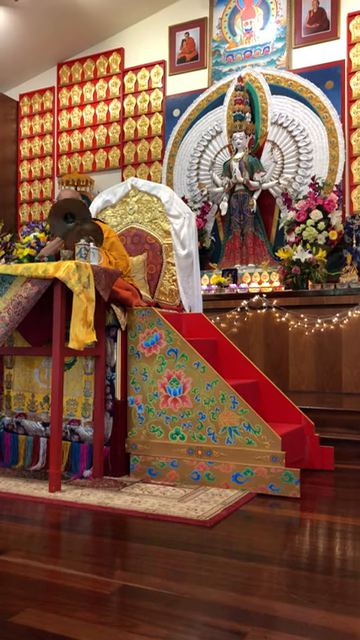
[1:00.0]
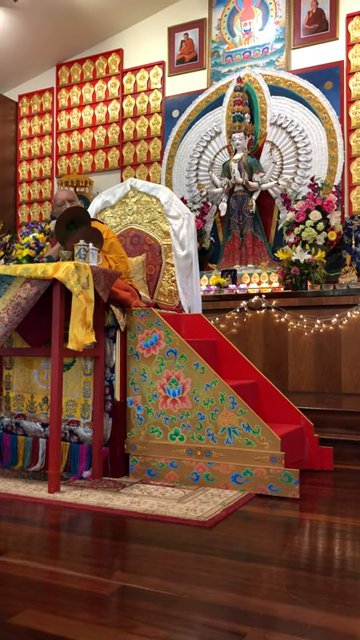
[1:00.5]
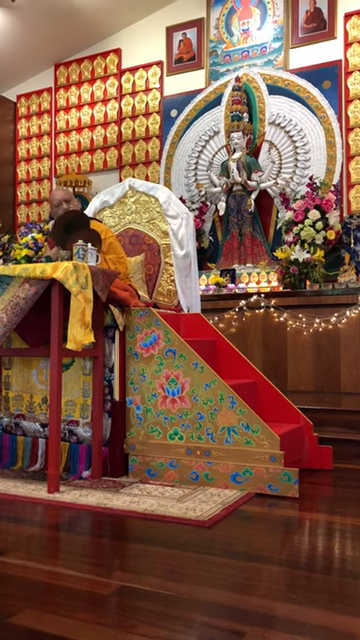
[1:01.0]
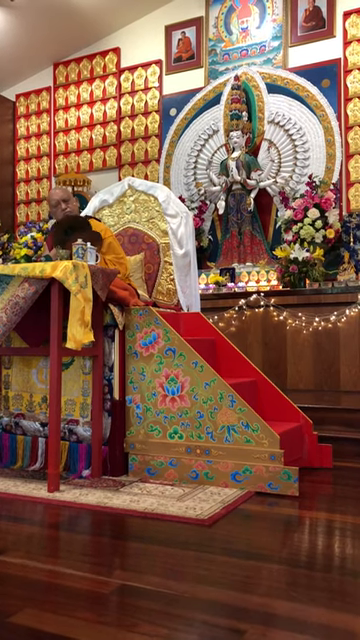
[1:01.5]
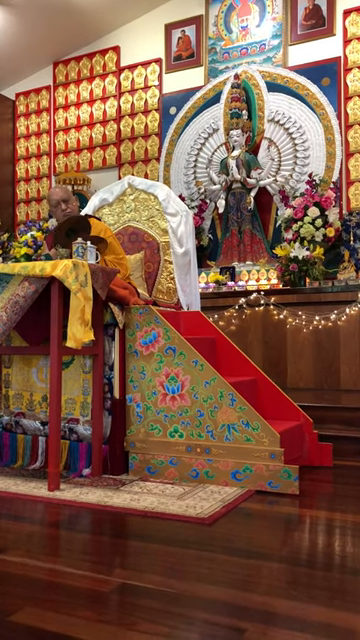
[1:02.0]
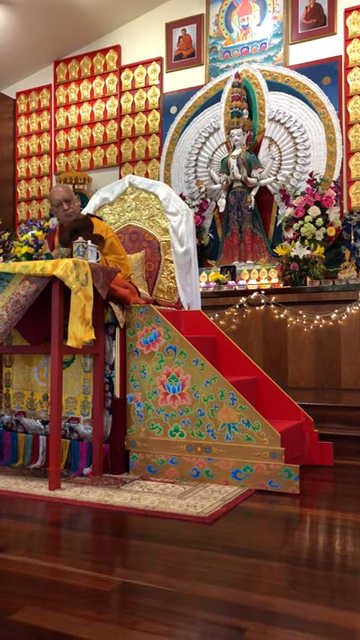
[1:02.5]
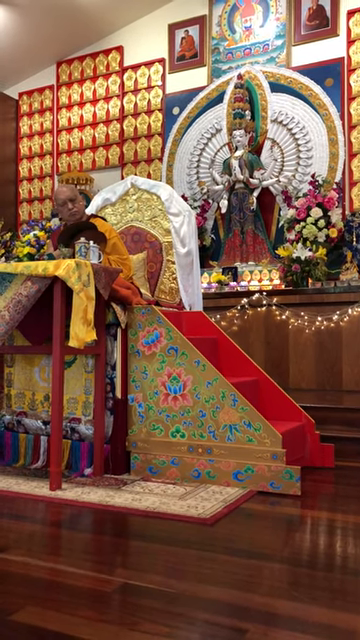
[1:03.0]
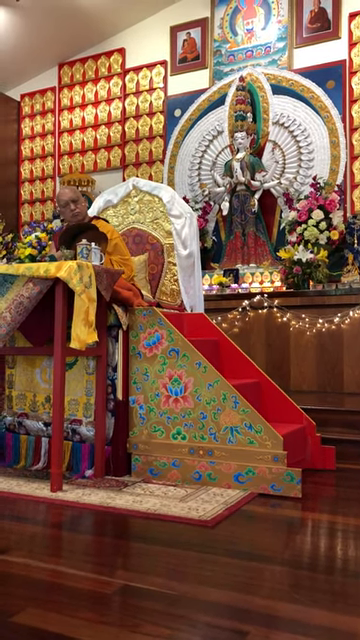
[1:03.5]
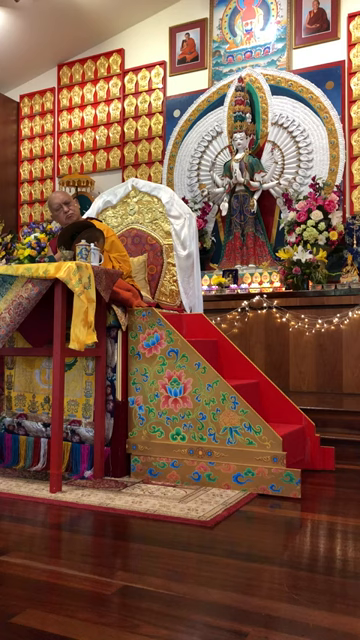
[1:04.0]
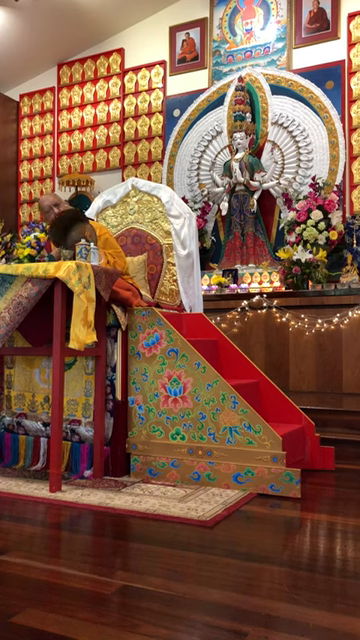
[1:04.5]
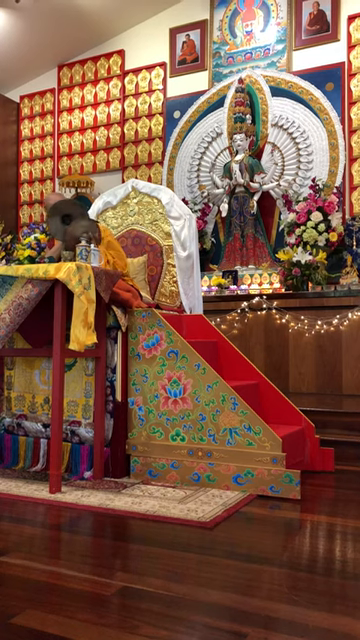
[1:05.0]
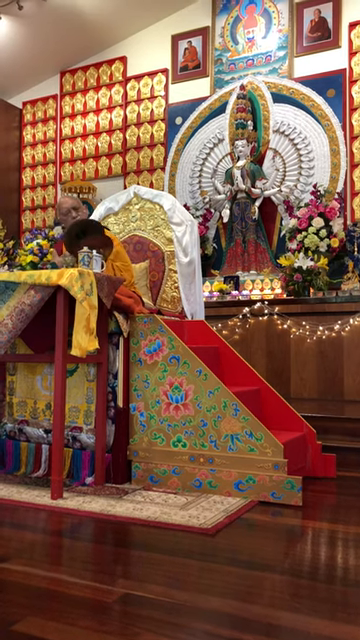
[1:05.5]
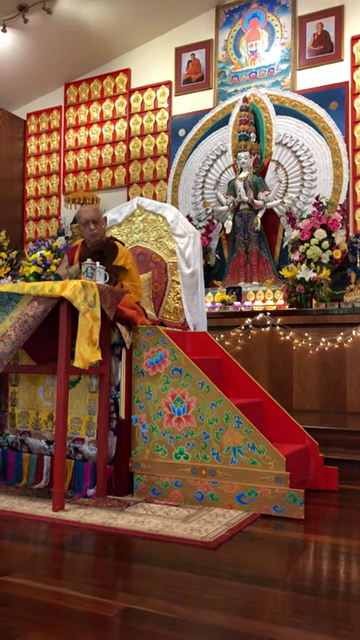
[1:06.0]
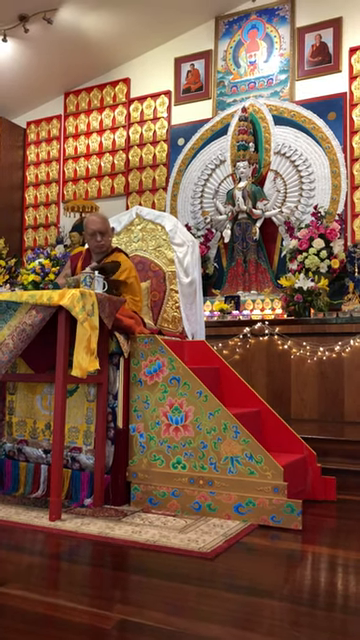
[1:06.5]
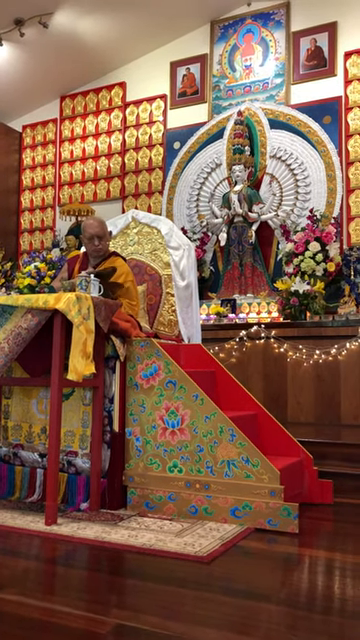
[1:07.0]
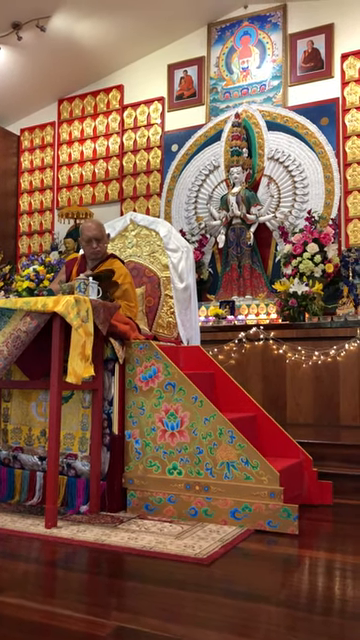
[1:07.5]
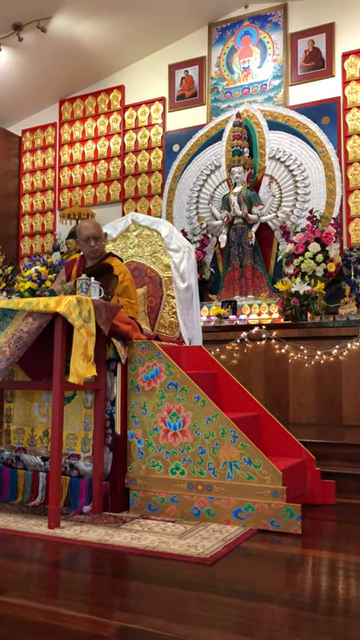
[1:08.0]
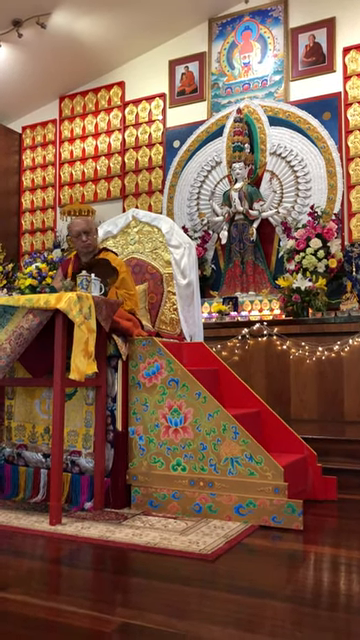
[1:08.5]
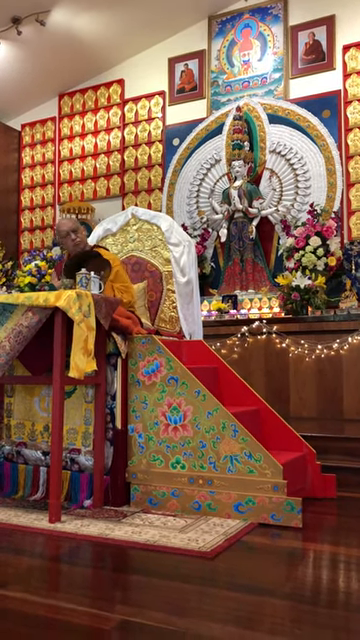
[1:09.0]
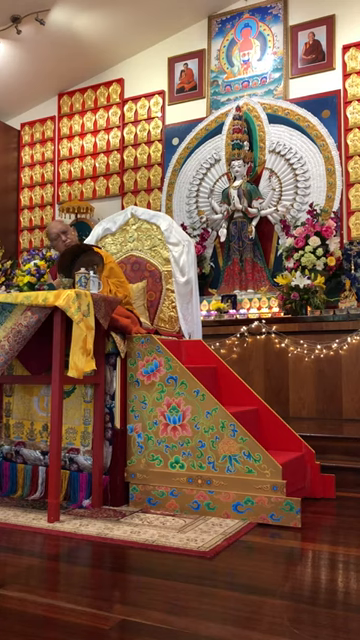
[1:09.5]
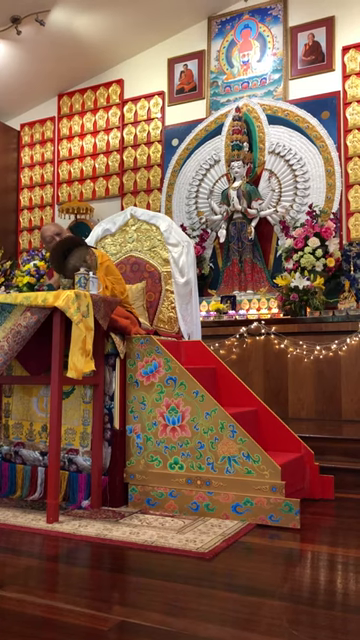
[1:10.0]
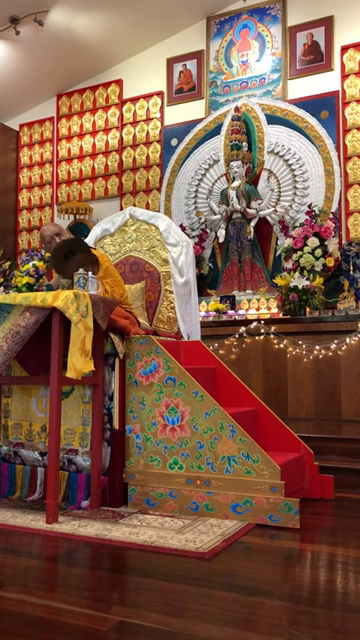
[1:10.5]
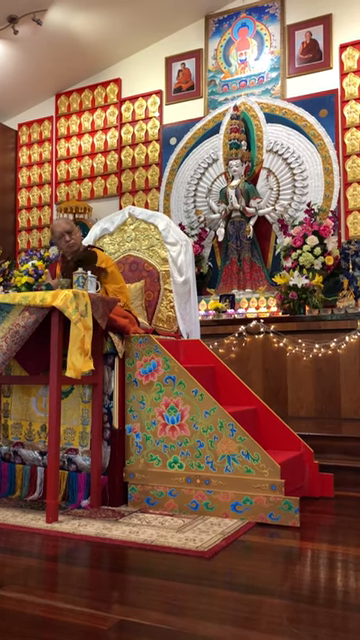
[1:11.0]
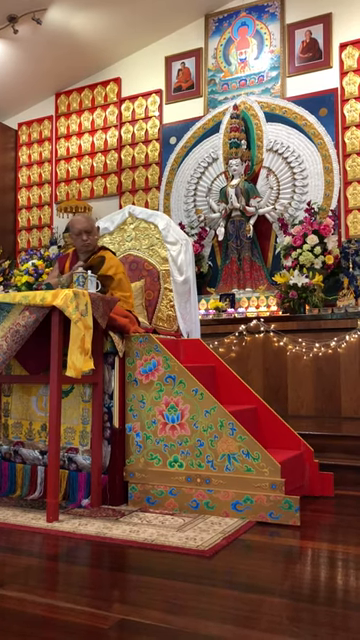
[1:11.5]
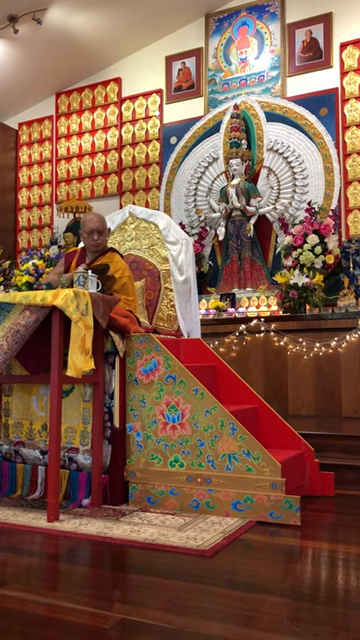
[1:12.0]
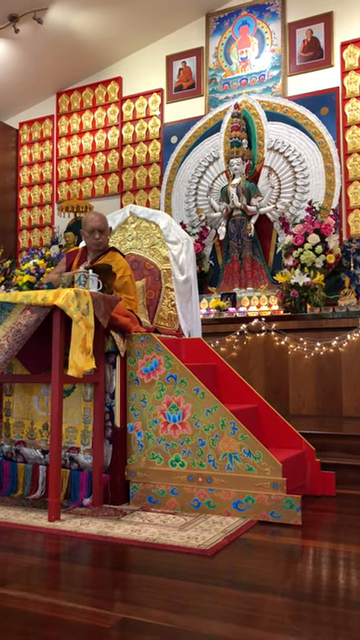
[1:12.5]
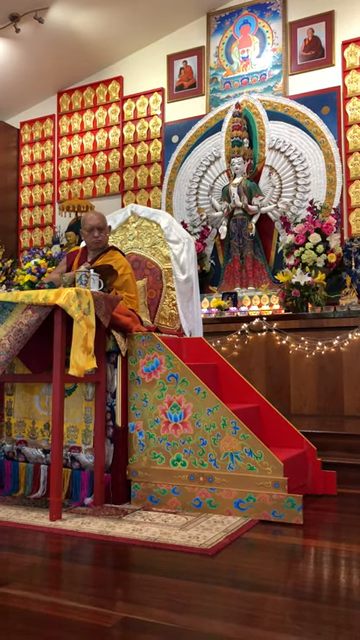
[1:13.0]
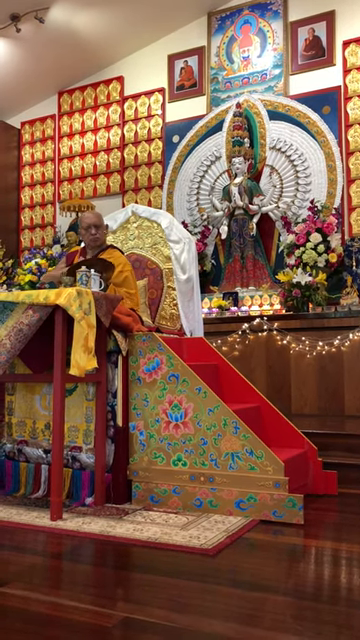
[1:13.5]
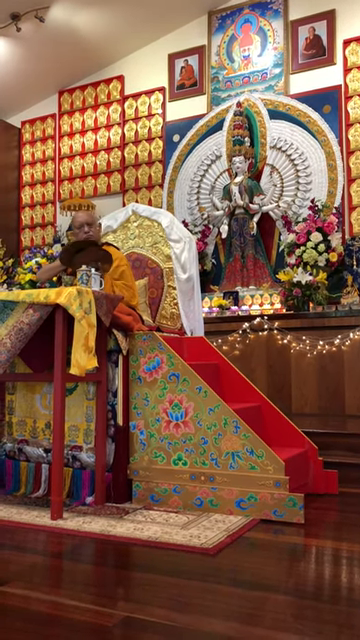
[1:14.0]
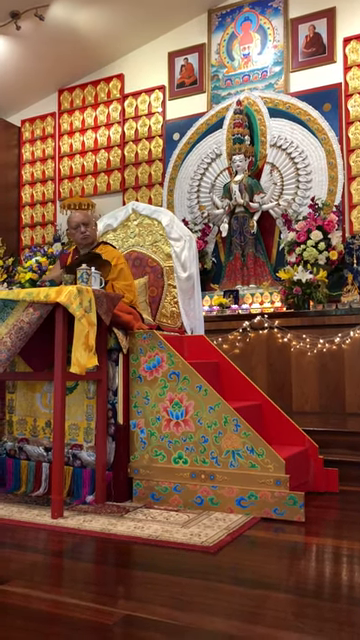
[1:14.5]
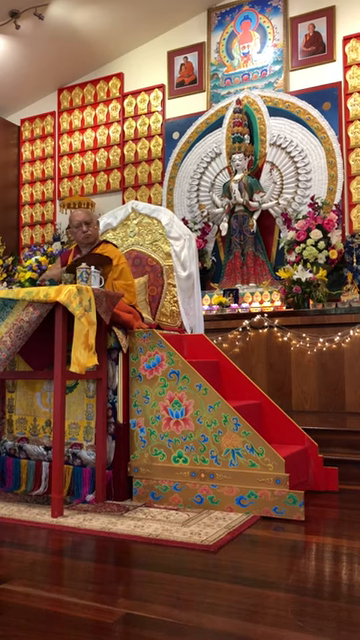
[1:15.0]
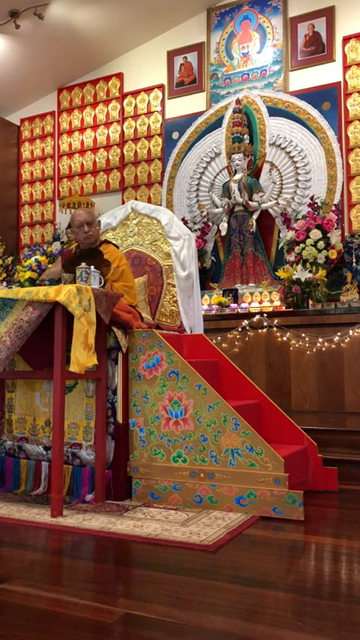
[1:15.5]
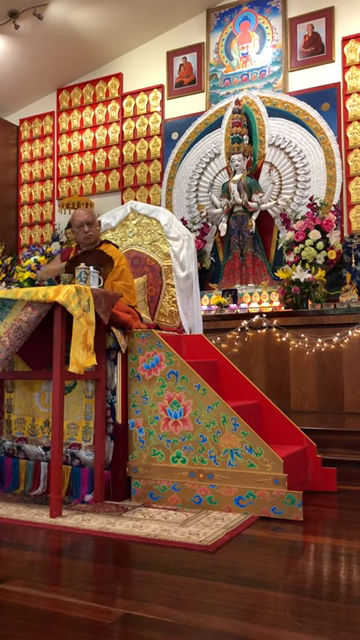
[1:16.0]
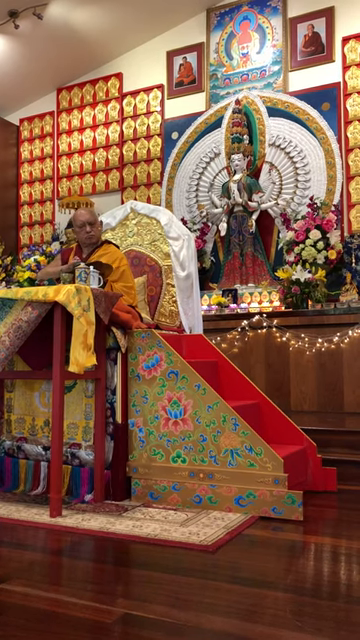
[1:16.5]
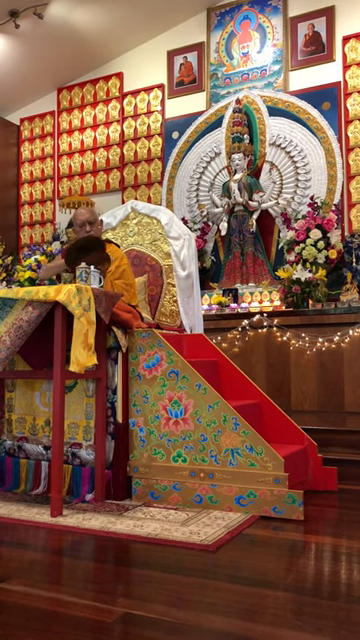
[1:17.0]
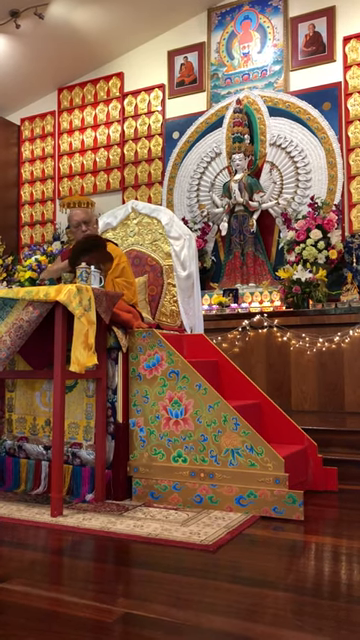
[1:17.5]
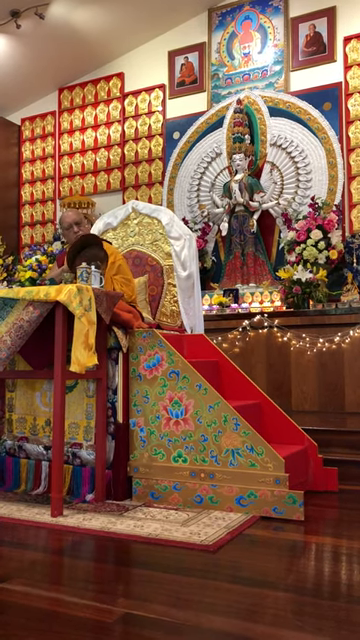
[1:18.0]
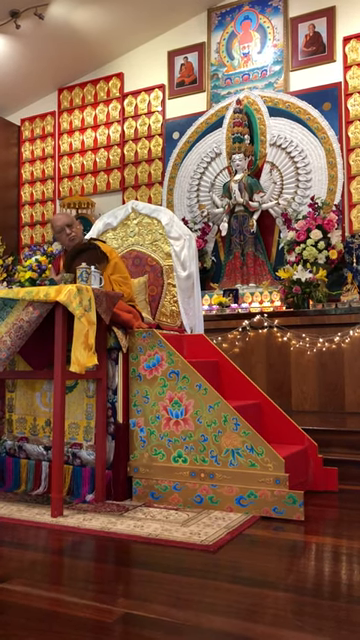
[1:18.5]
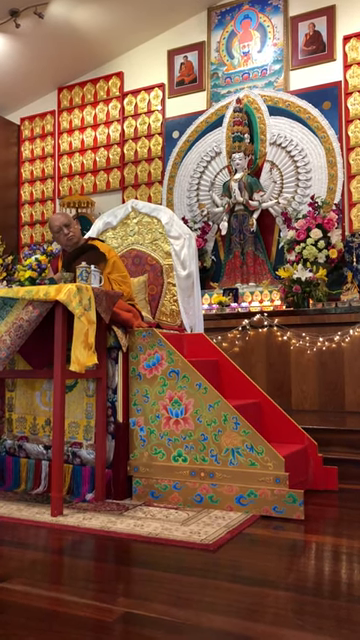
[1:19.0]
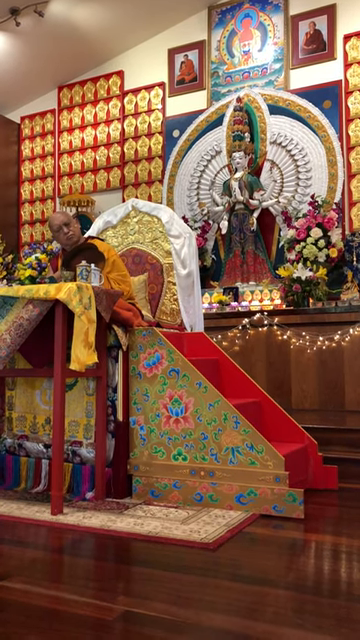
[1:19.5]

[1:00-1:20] A Buddhist monk is in a Buddhist temple with a shiny parquet floor. The wall is adorned with kind of Buddhist religious photographs, and there is a statue and some red and gold coverings on the walls. Just underneath the statue is sort of an altar with flower arrangements, fairy lights and candles. In front of that is a golden throne, quite high, and a small wooden table with kind of double-length legs, so tall that there is a small set of three steps to the side to allow the monk to get up onto the throne. The monk wears an orange outfit and holds two hand cymbals, which he taps together very gently, bringing his whole body into the movement. He sways back and forward, looking intently at the cymbals, and the cymbals sway too.